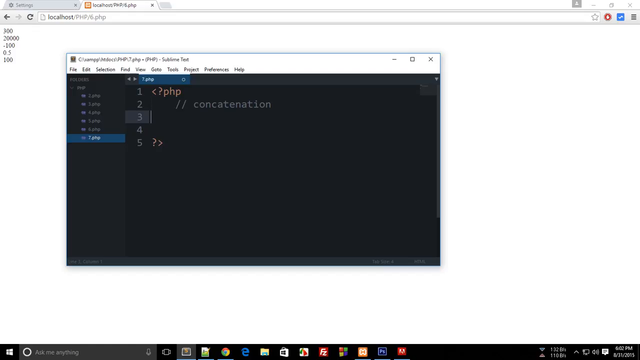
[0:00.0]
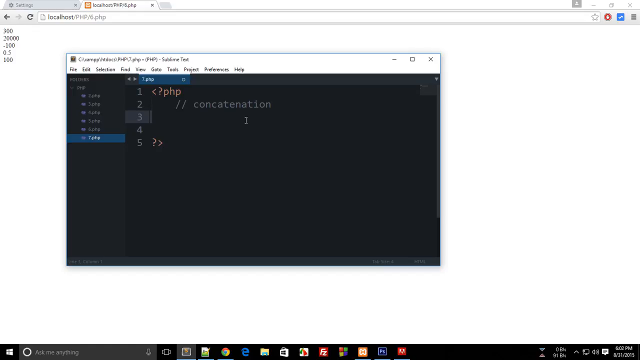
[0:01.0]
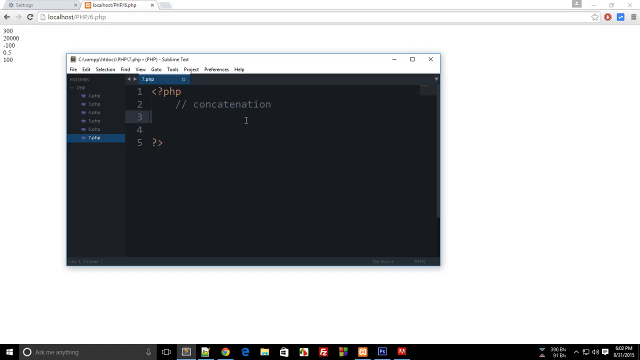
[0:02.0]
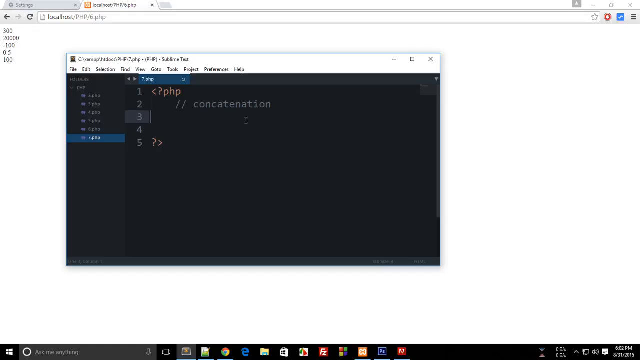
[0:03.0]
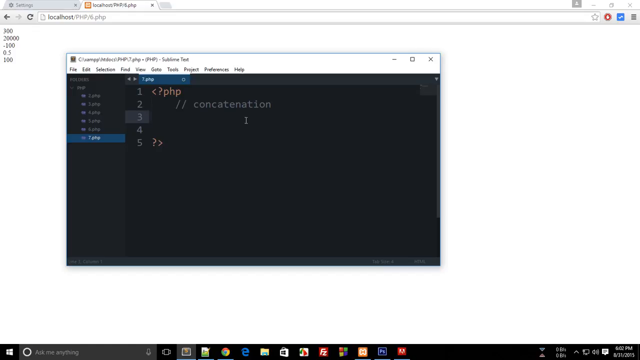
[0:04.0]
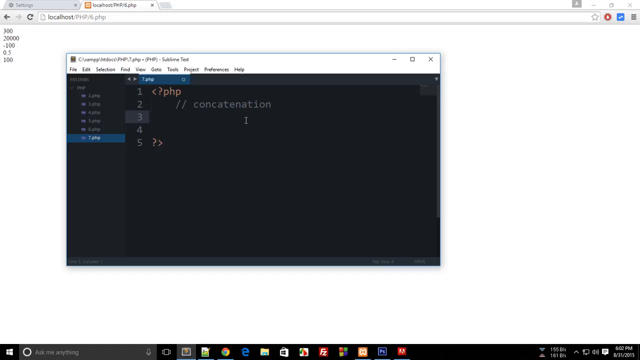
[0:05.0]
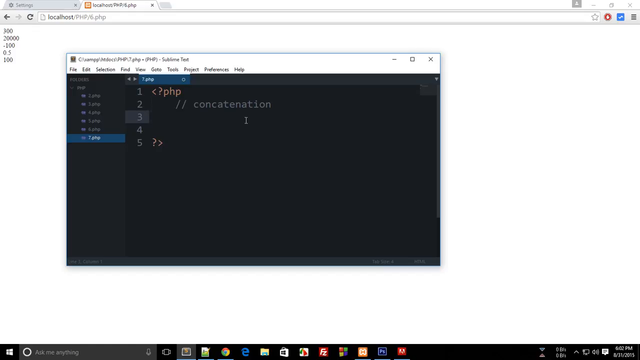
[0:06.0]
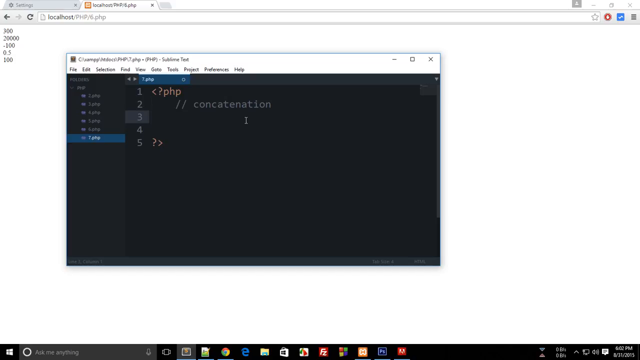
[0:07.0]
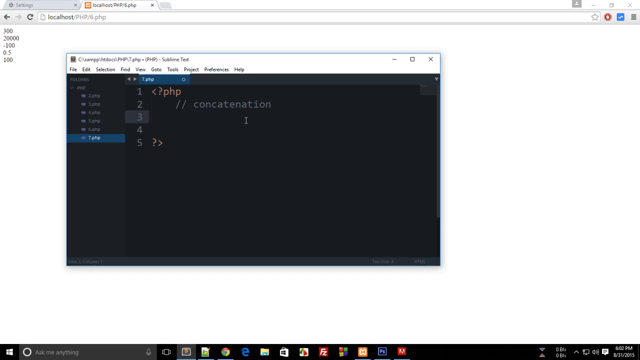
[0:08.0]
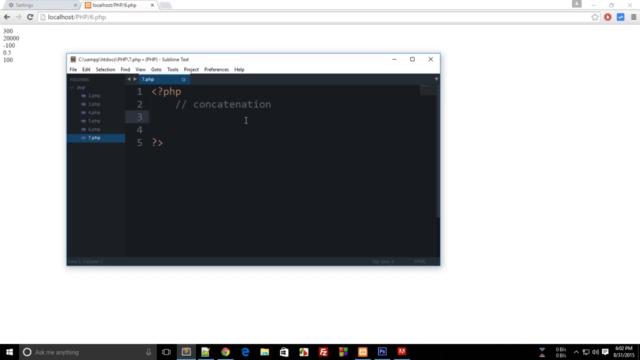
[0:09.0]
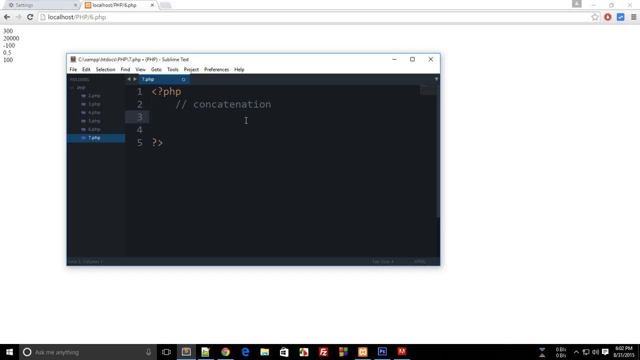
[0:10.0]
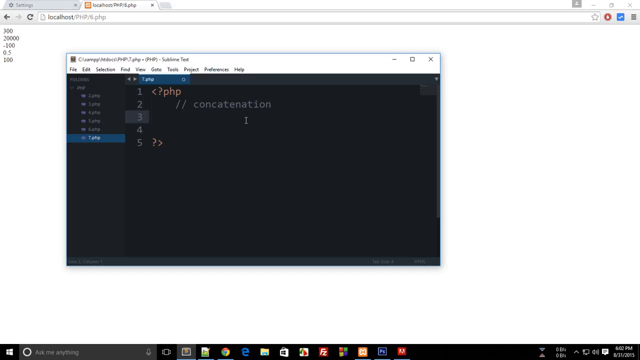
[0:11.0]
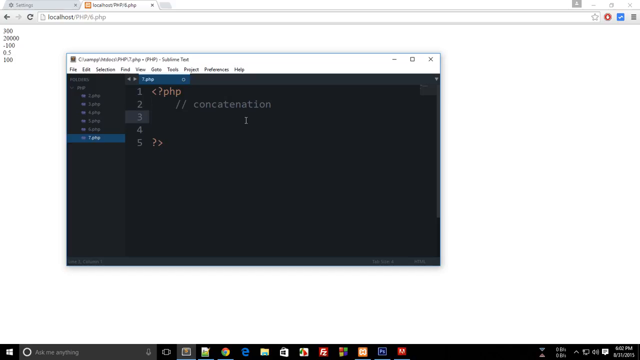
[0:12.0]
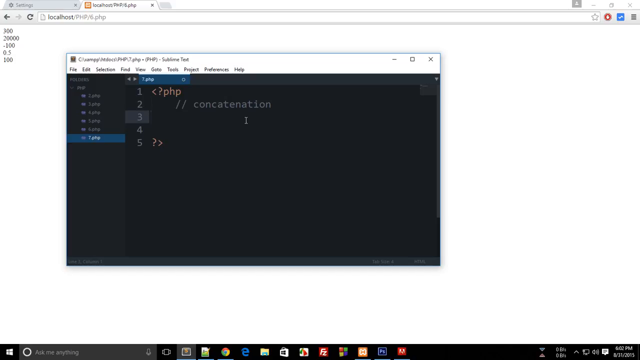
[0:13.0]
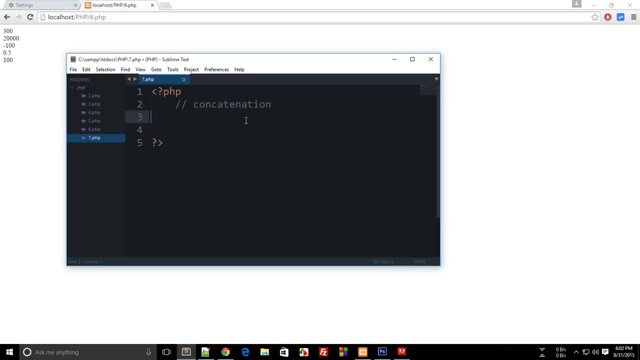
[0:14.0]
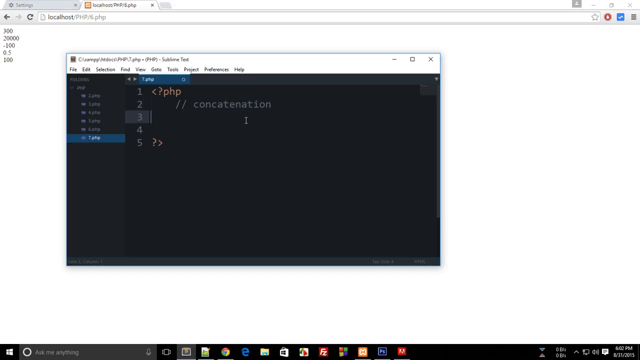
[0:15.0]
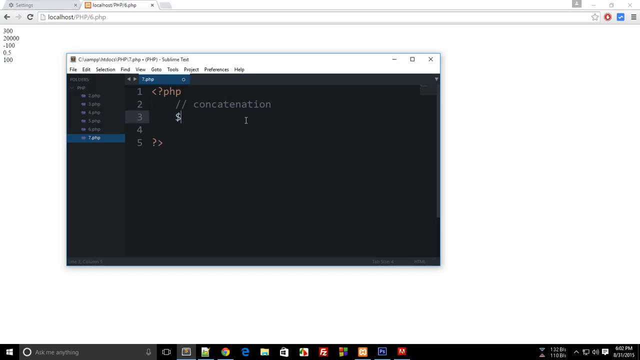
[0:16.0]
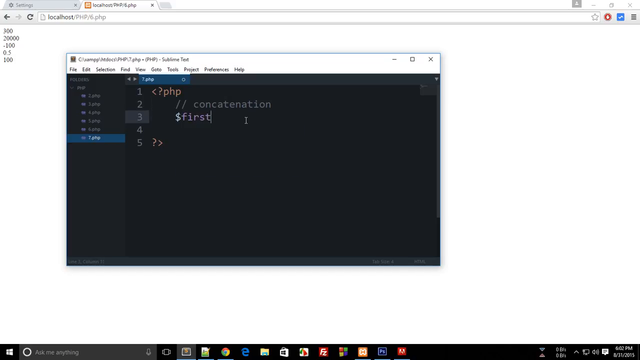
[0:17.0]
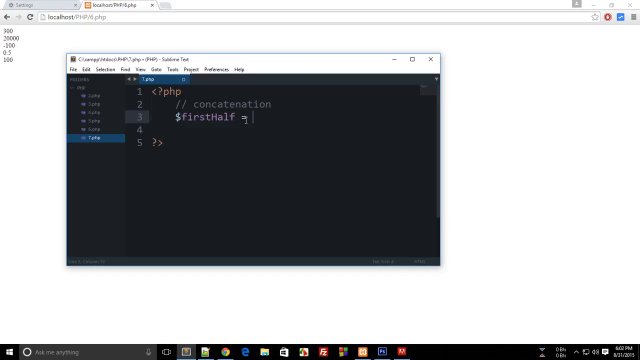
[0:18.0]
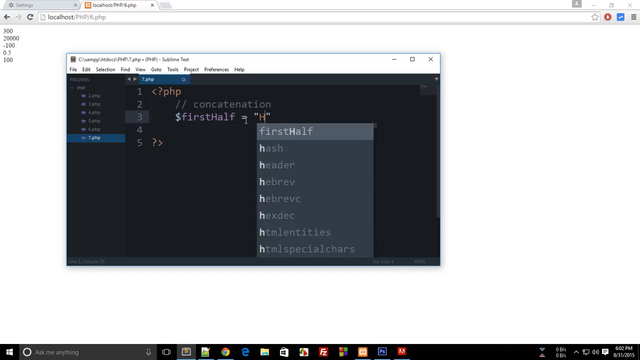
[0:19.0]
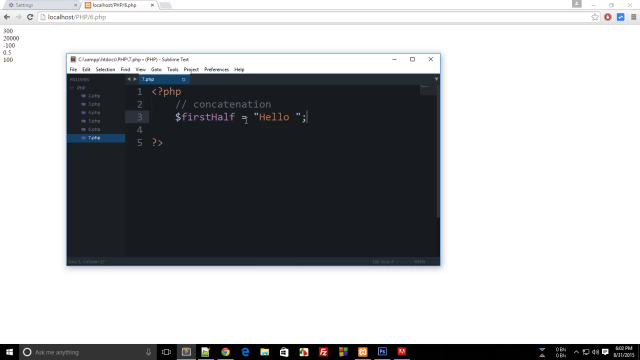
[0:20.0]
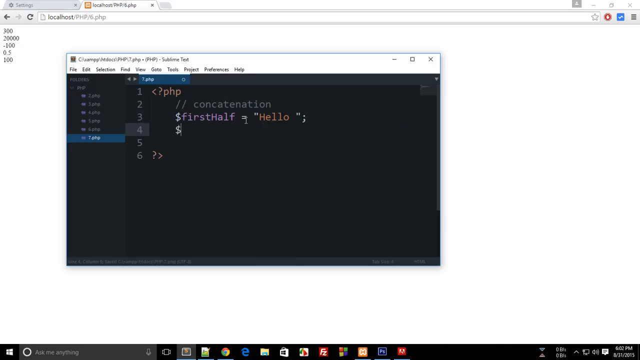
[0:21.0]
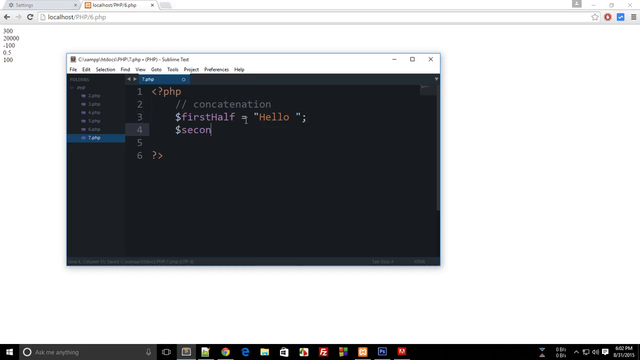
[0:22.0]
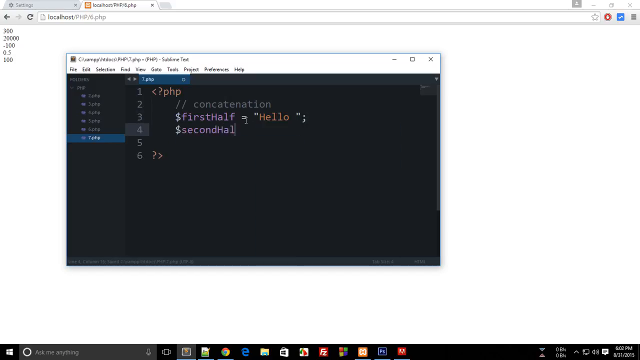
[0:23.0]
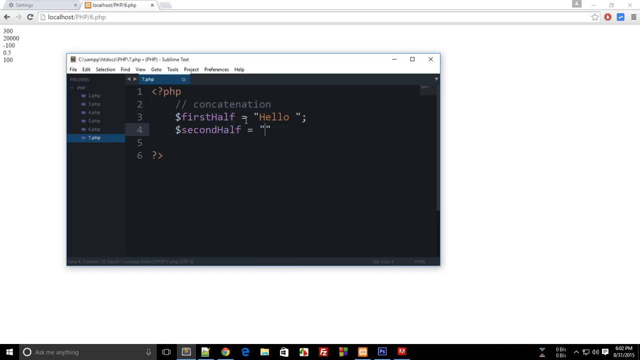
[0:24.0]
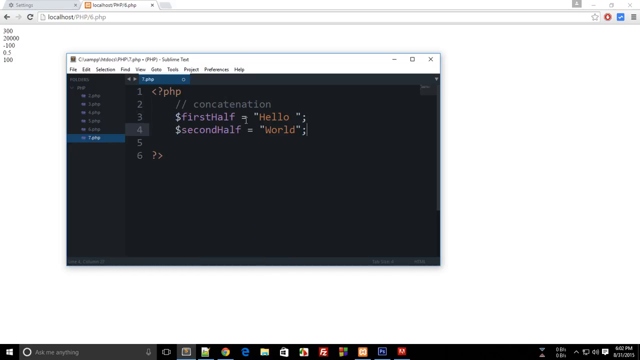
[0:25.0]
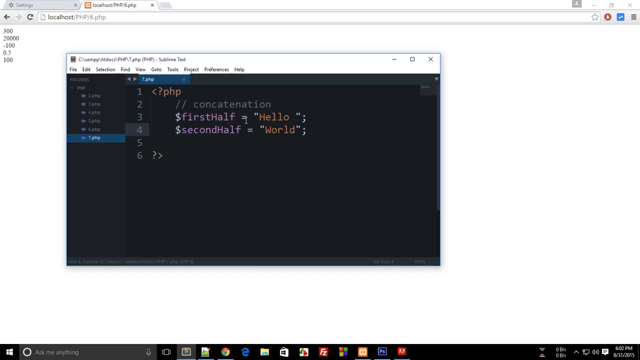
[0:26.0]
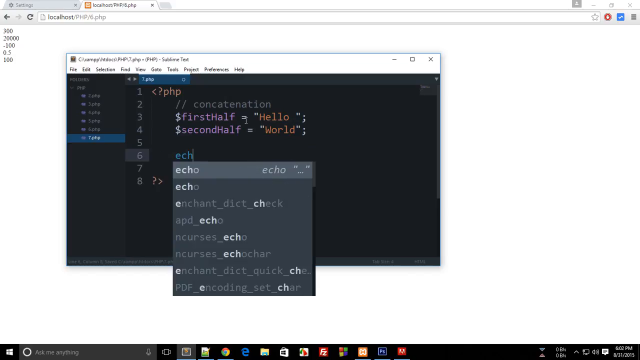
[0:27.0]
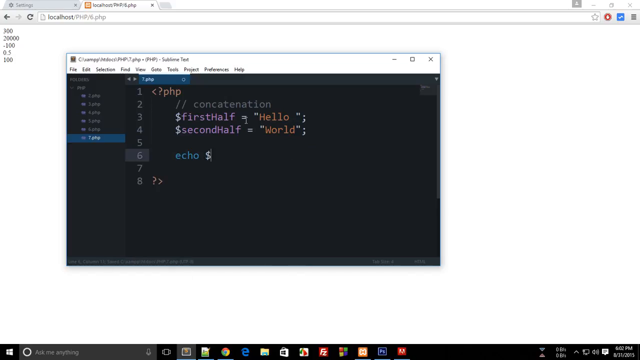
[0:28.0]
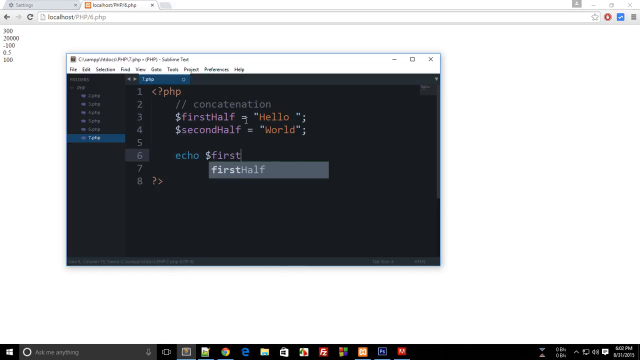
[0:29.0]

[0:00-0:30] An individual in an IDE appears to be writing a PHP application. There is a comment stating "concatenation", and the individual then writes what looks to be a Hello World program. The first half, which looks to be a string, is "Hello" followed by a space, and the second half, which also looks to be a string, is "World", so this appears to be a Hello World concatenation example in PHP, possibly a programming tutorial. The IDE has a black background; the PHP characters are in orange, the string characters are also in orange, and the variable declarer is in purple.